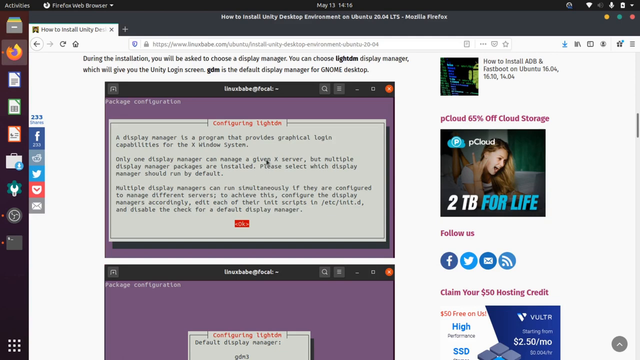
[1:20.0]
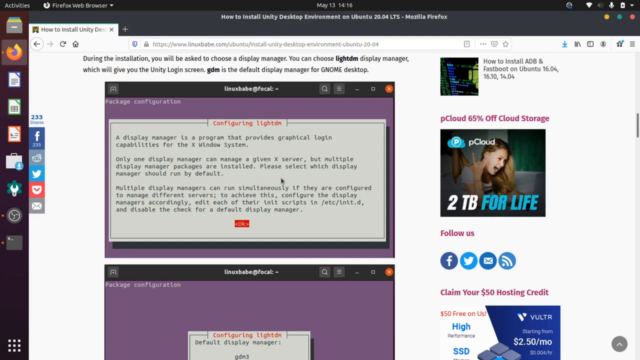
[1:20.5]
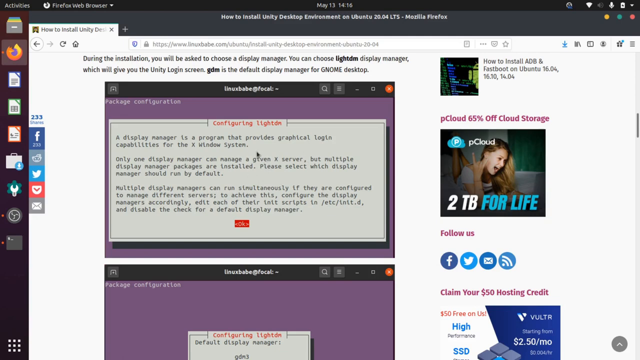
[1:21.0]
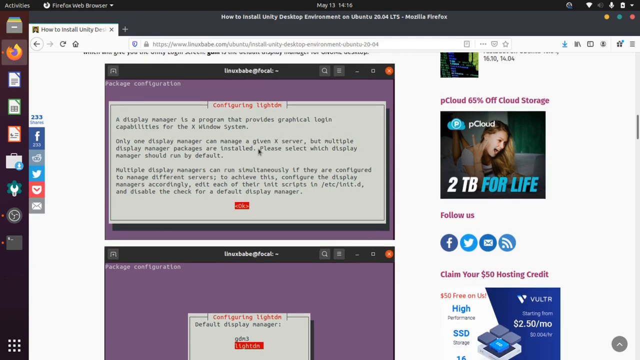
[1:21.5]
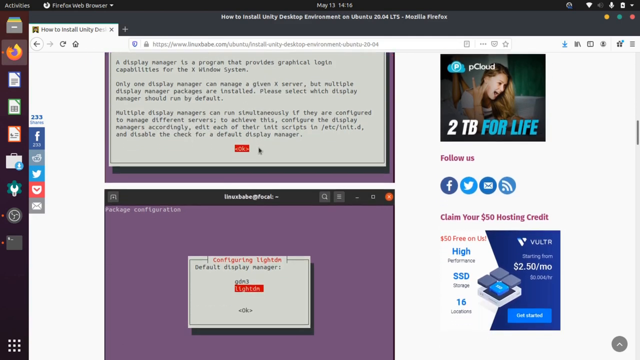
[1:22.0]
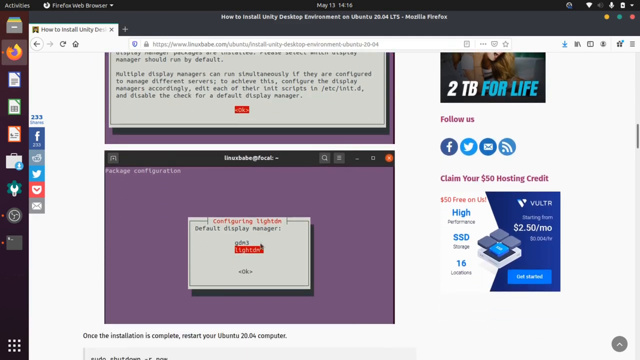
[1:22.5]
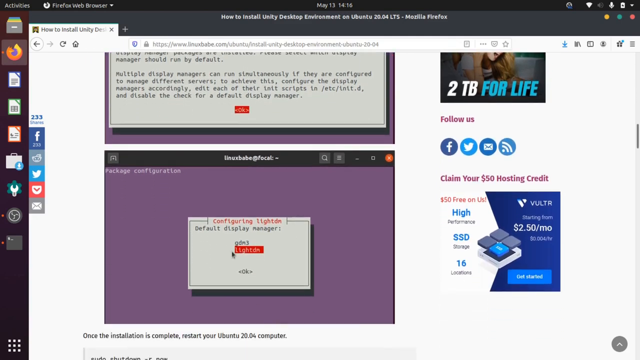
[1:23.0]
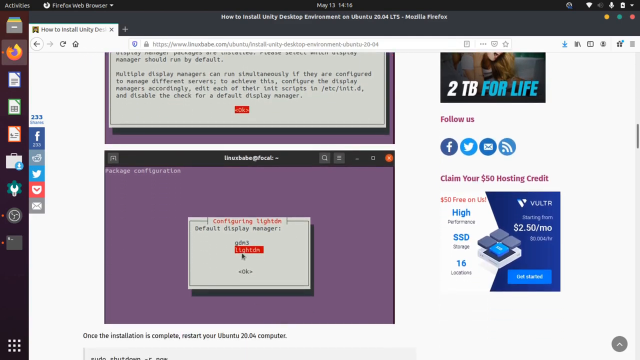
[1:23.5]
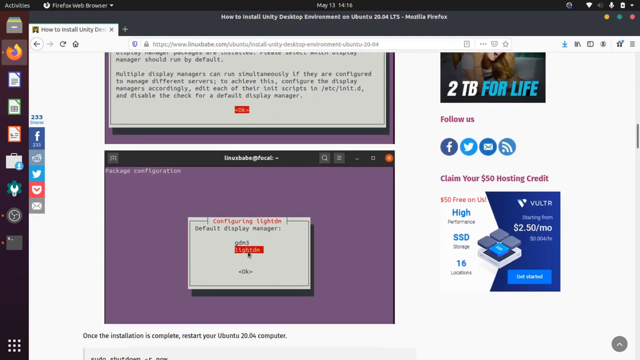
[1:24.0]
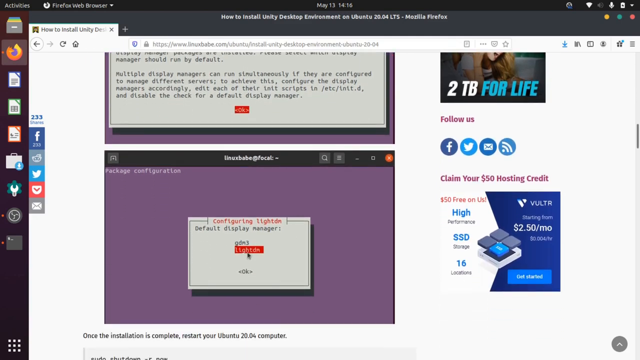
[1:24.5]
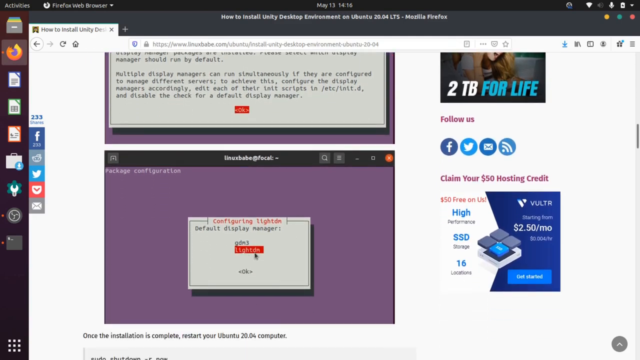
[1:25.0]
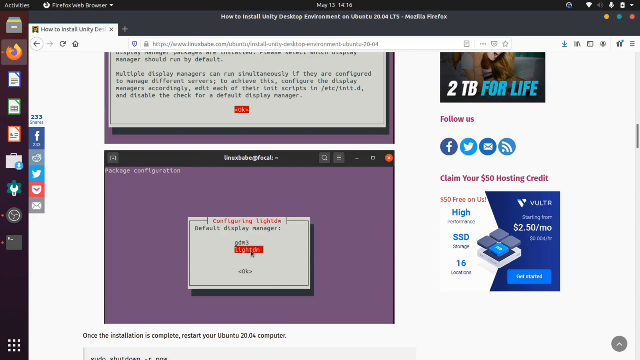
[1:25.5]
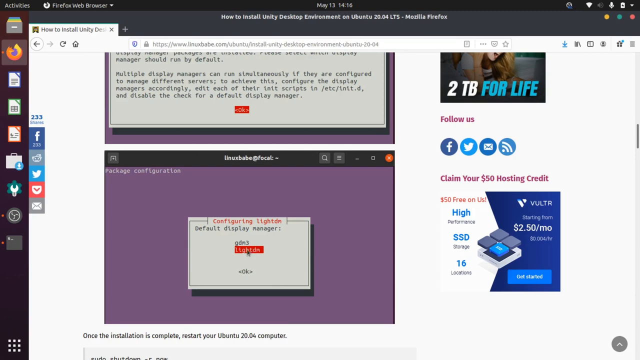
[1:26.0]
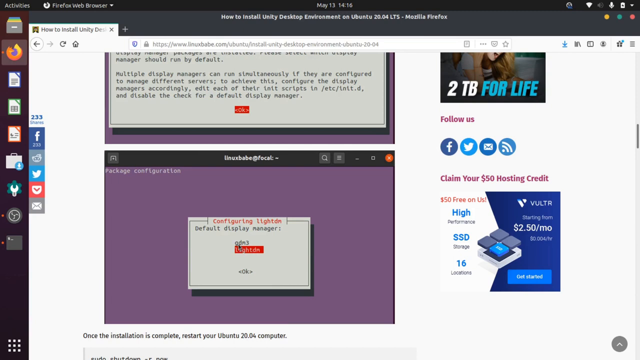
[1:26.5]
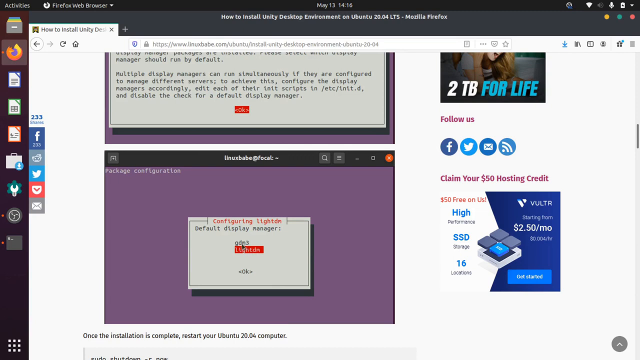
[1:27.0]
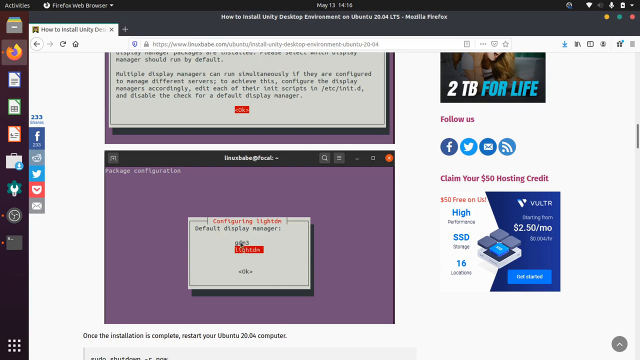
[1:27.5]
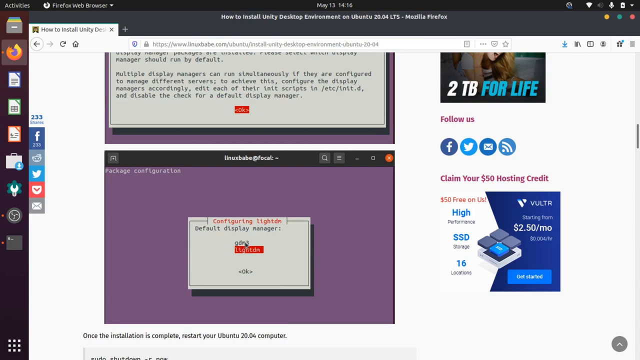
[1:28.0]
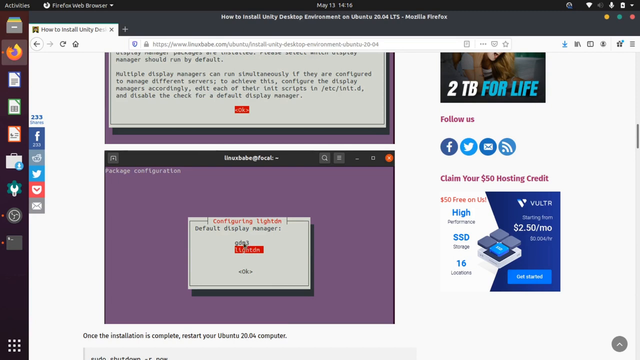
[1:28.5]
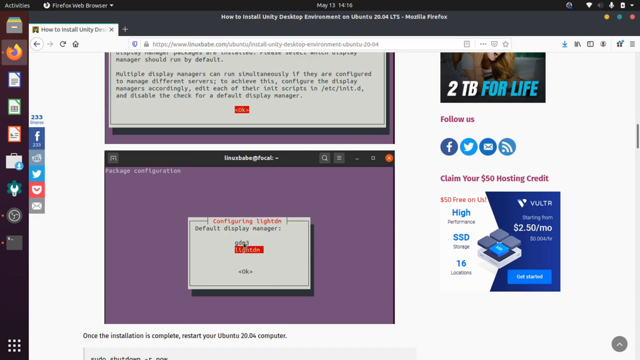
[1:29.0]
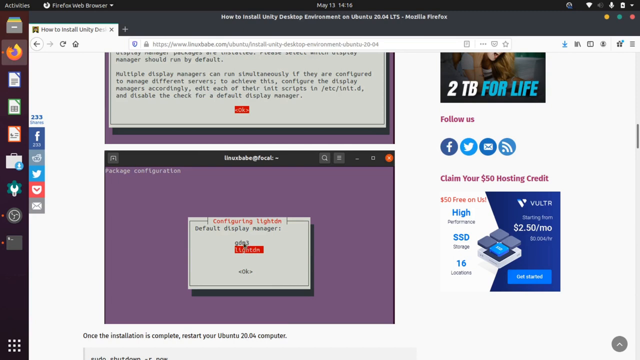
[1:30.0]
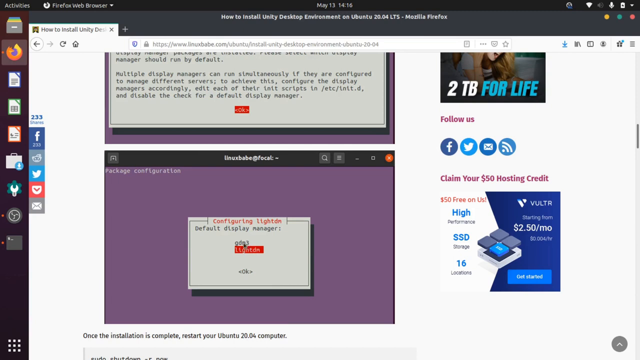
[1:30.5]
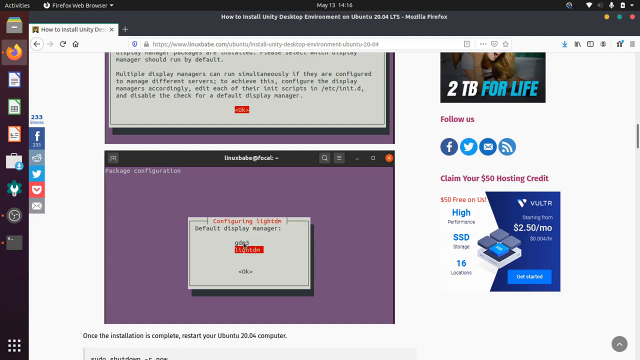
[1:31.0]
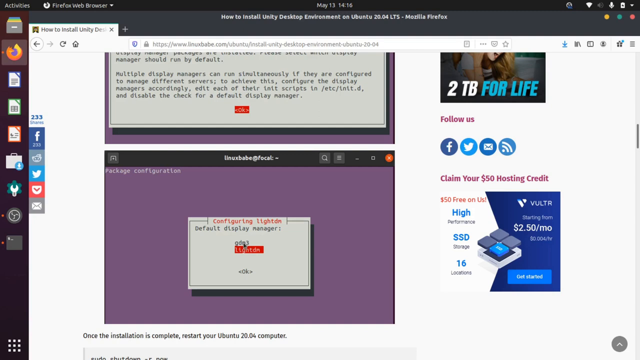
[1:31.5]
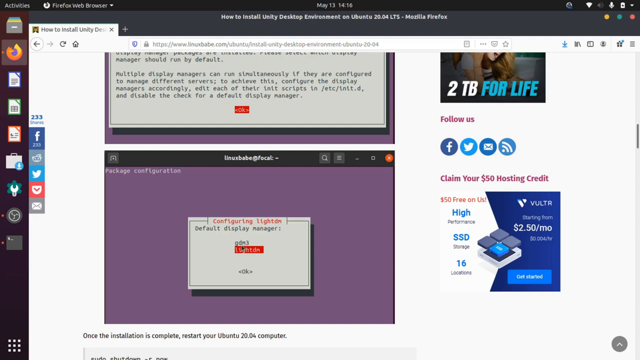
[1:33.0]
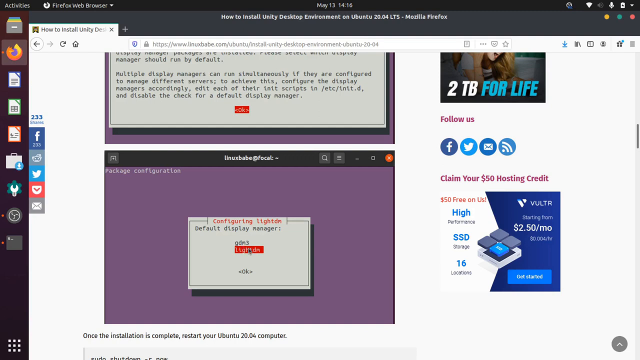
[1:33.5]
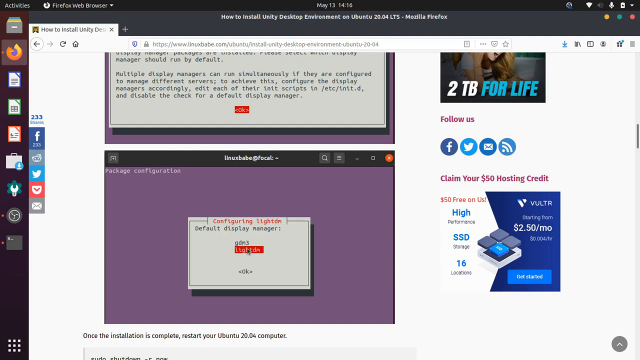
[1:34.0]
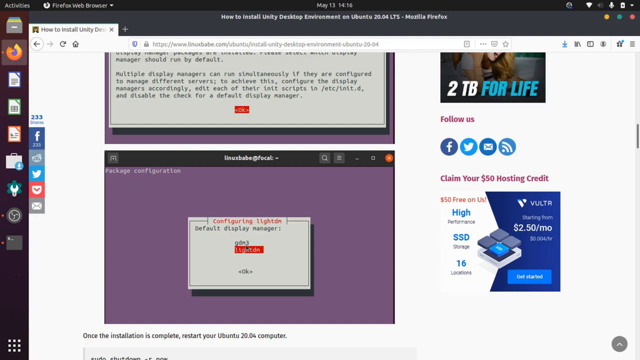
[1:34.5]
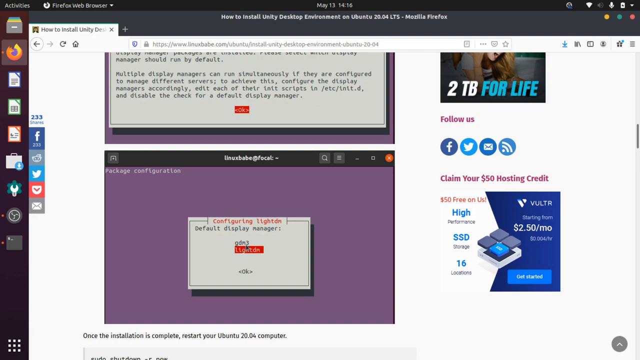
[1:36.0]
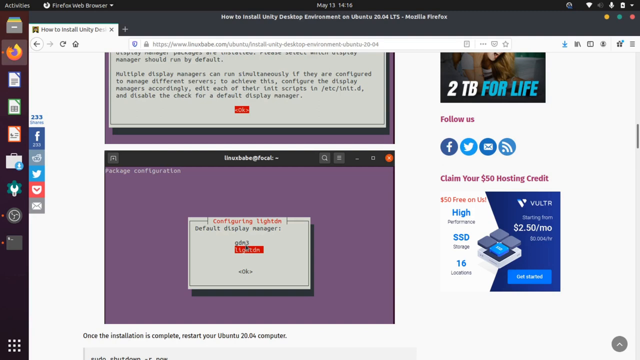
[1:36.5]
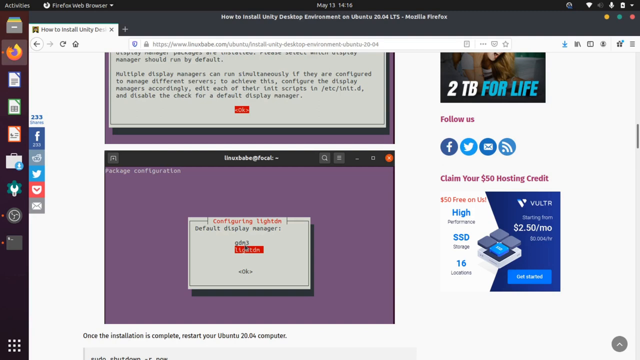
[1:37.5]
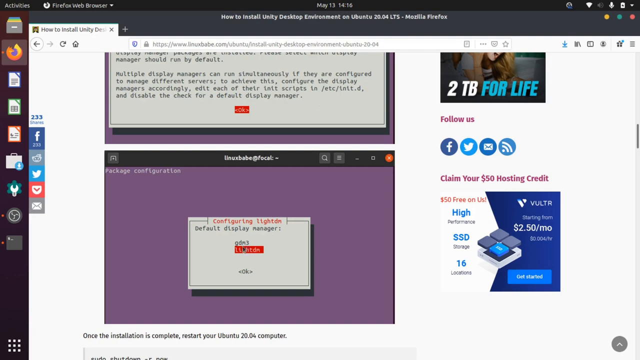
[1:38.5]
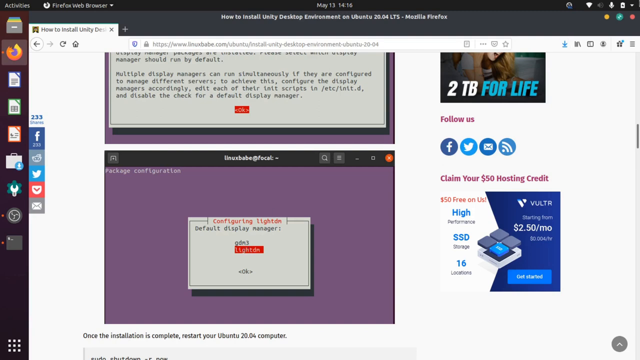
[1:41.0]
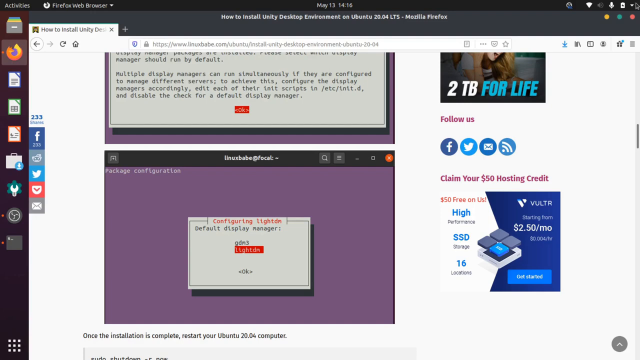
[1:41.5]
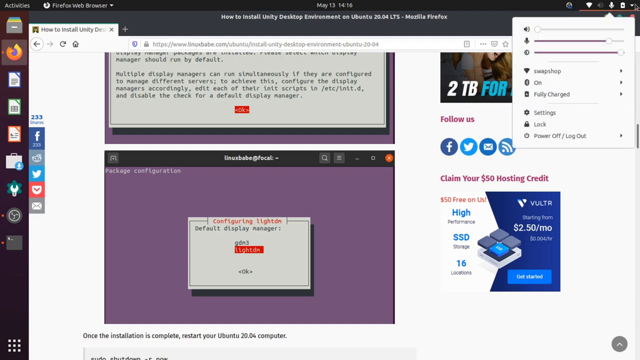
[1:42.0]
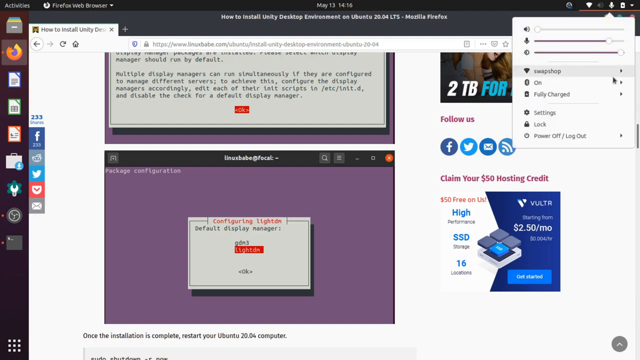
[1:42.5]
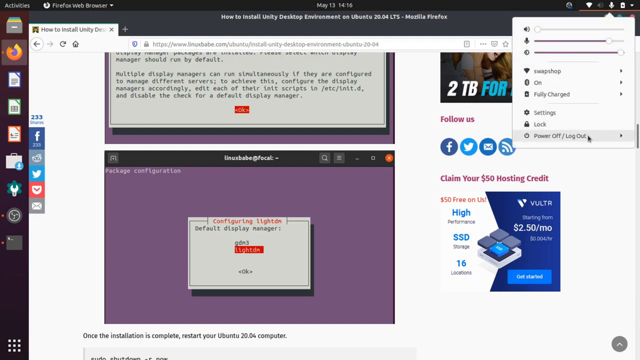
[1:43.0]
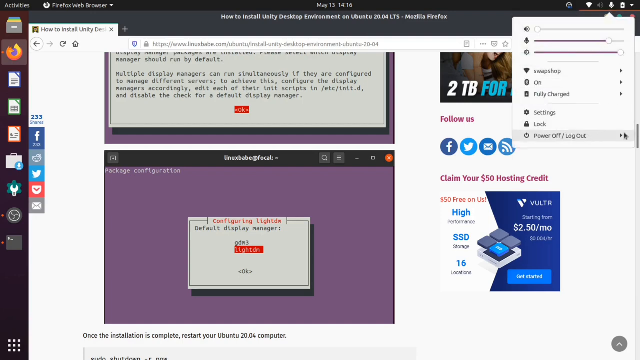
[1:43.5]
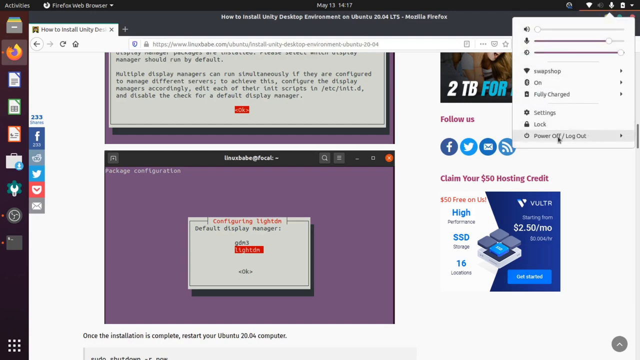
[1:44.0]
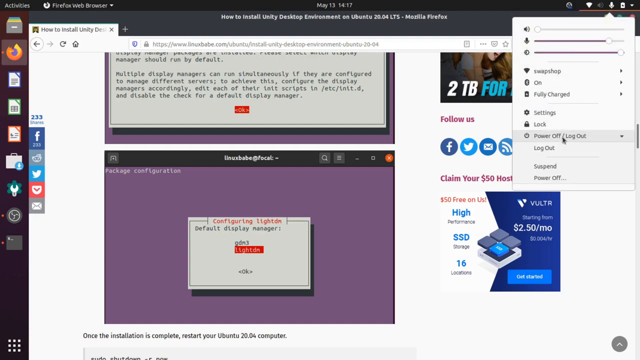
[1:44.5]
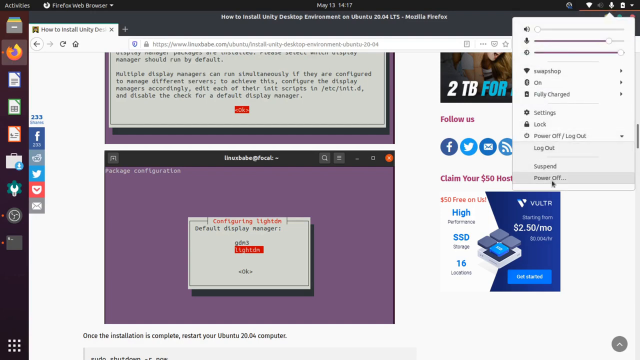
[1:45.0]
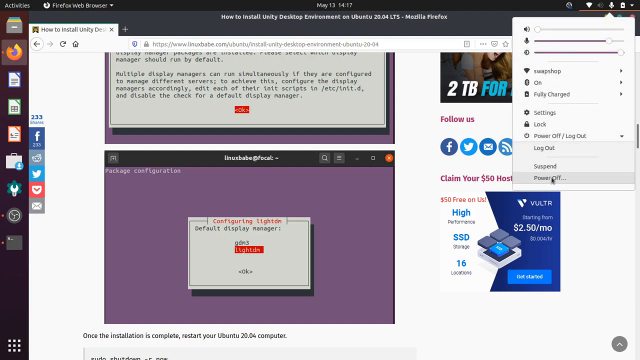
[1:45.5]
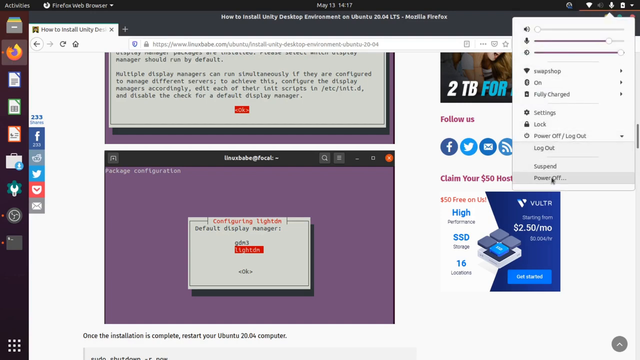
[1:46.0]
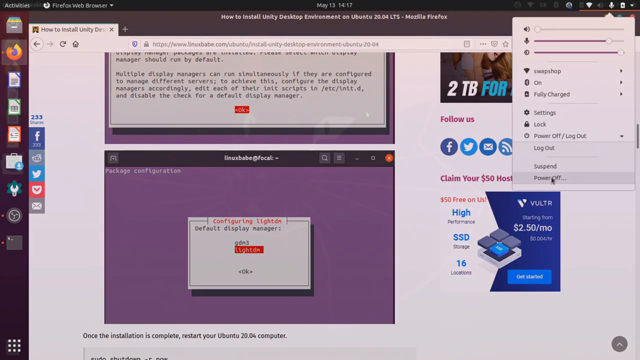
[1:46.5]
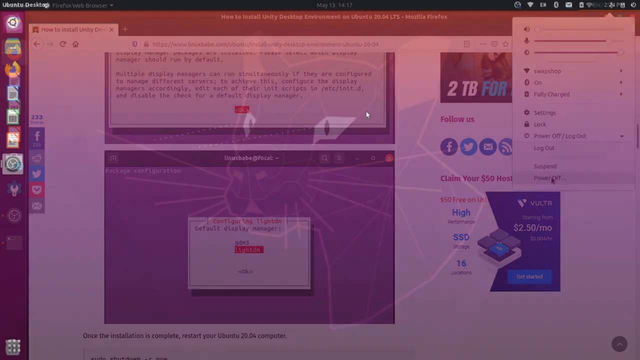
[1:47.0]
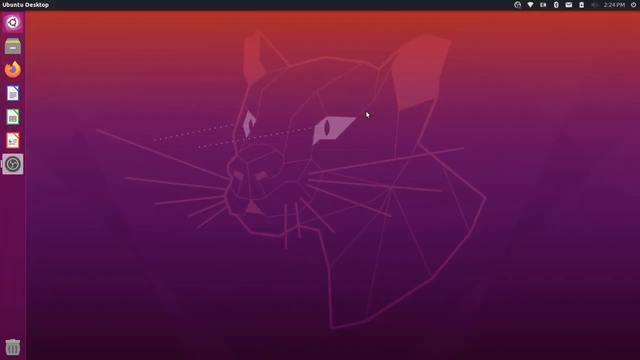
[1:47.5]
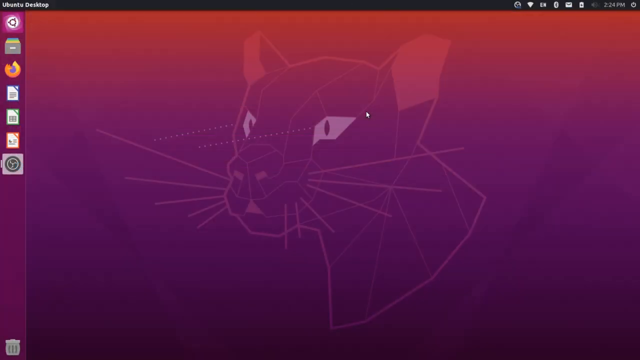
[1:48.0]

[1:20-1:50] A web page is open in the Firefox browser on a monitor or Windows PC, with a date stamp of May 13th at 14:16. The page has a how-to article, and at the bottom are two boxes for configuration of what looks like light DM, containing text explaining what it is. The cursor moves around the boxes, highlighting sections. It then goes up to an arrow at the top, and a box drops down; the cursor moves all the way down the list to power off, log out, and clicks Power Off. What looks like a screensaver appears, sort of lavender in color, a mix of lavender and amber, with an image of a big cat, a large predatory cat, drawn in straight lines yet realistic-looking, with whiskers.